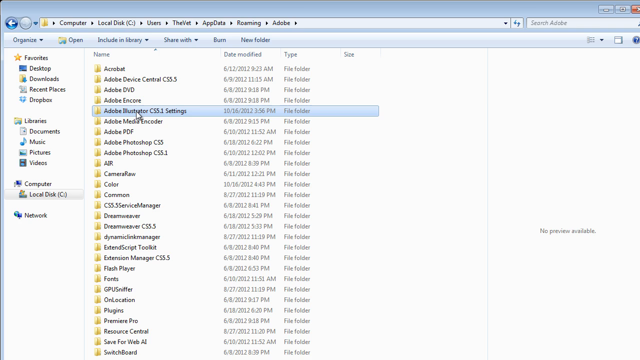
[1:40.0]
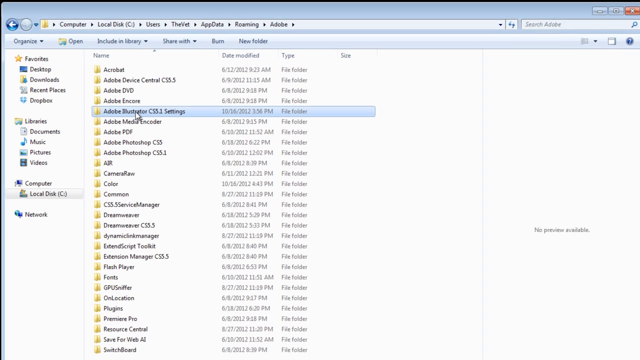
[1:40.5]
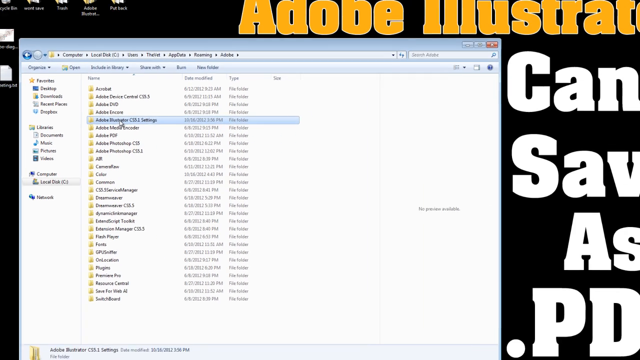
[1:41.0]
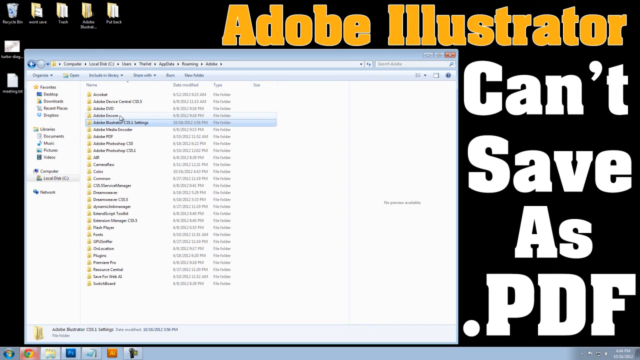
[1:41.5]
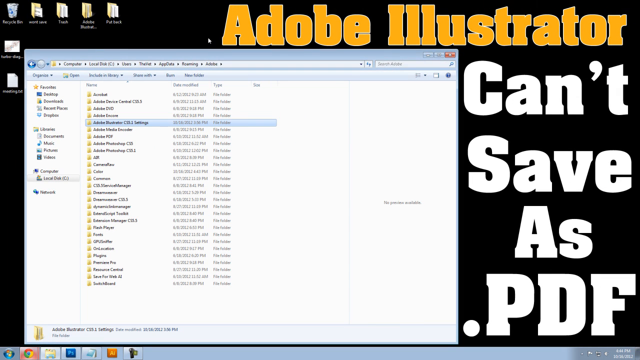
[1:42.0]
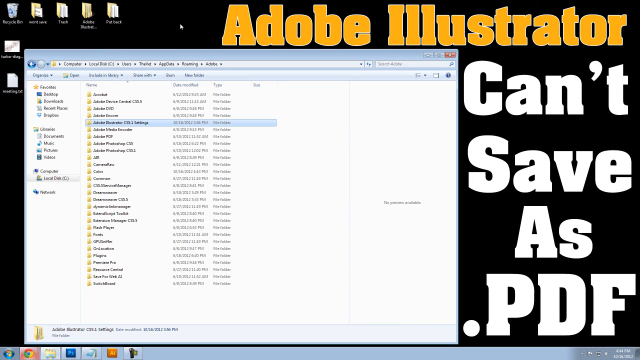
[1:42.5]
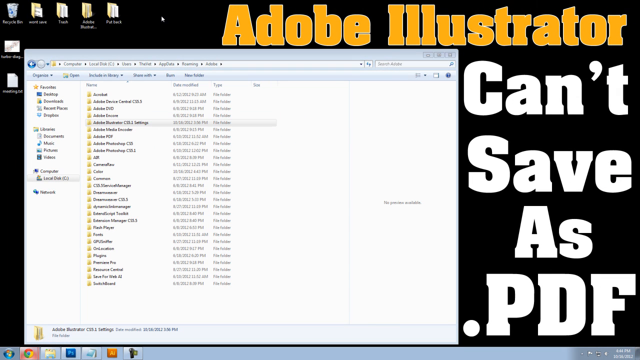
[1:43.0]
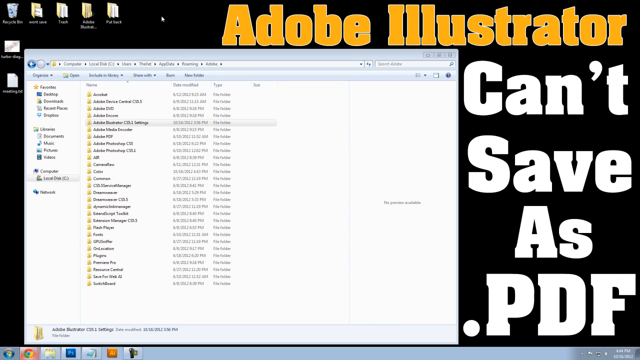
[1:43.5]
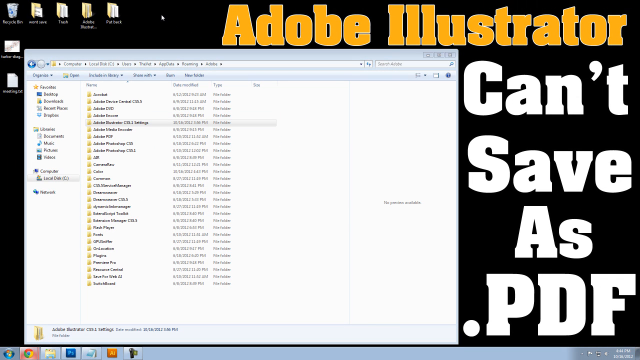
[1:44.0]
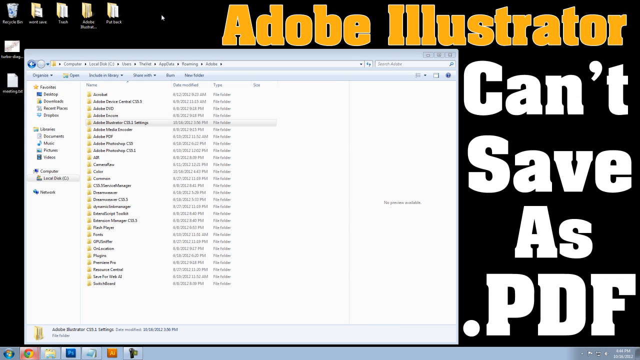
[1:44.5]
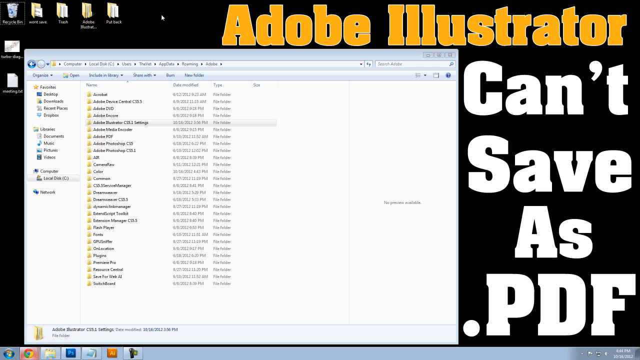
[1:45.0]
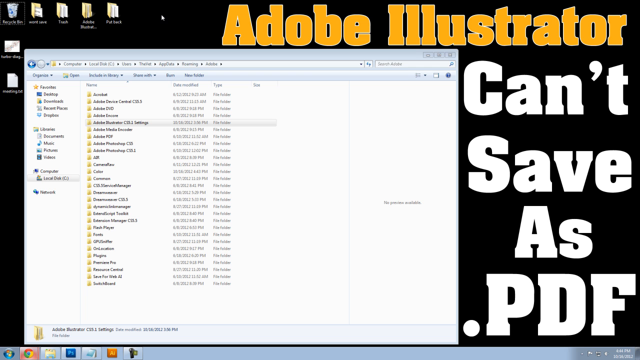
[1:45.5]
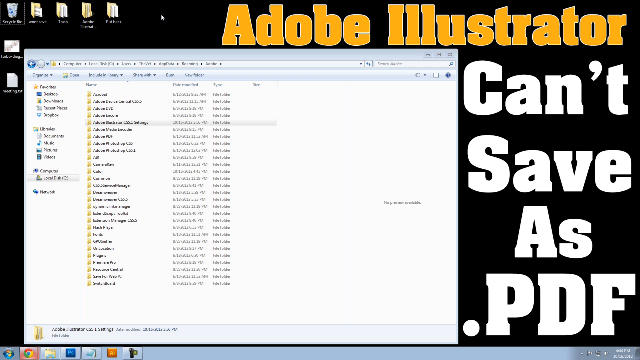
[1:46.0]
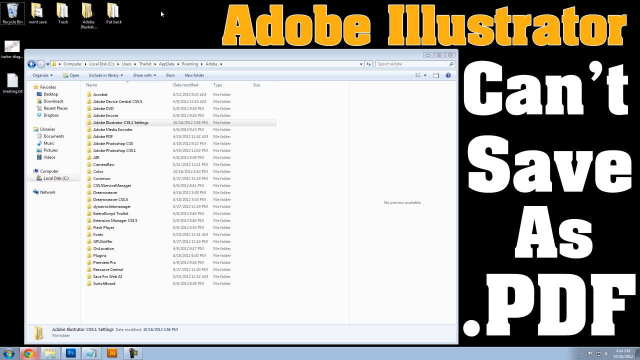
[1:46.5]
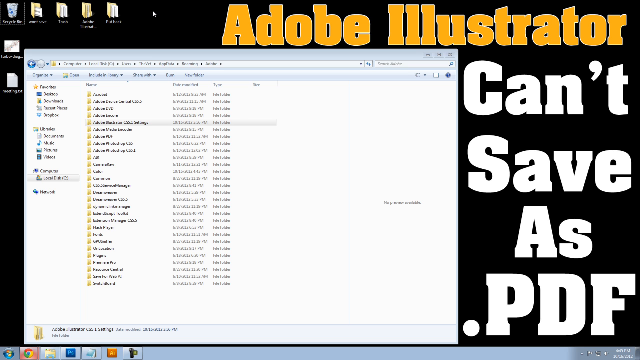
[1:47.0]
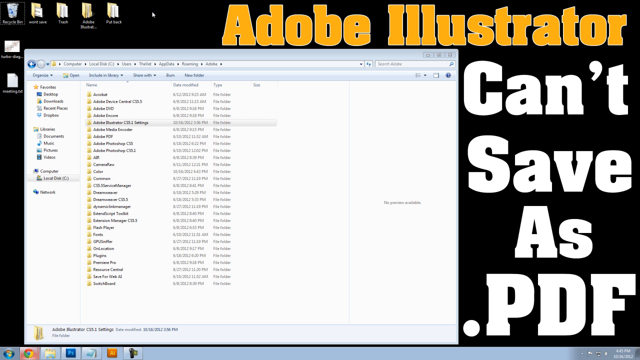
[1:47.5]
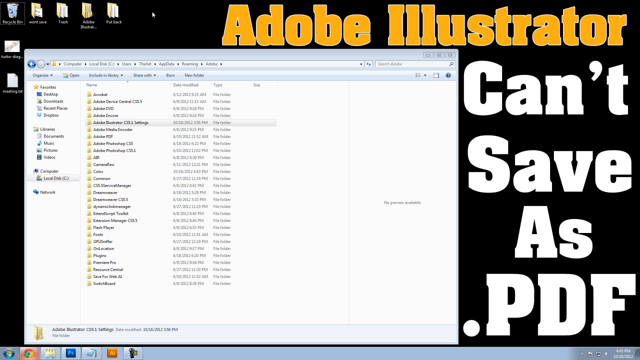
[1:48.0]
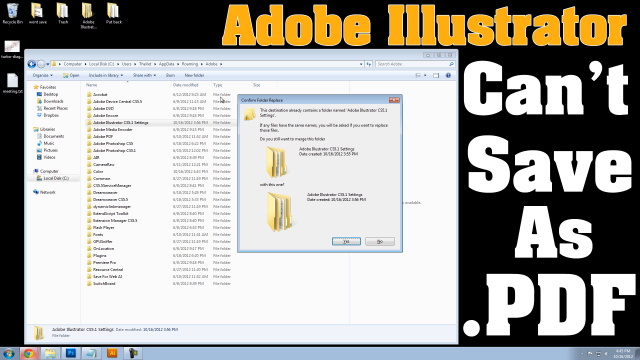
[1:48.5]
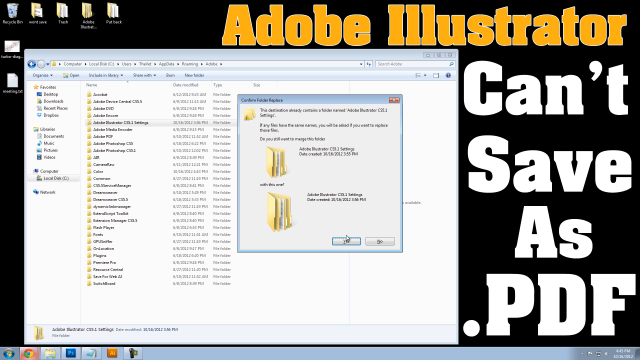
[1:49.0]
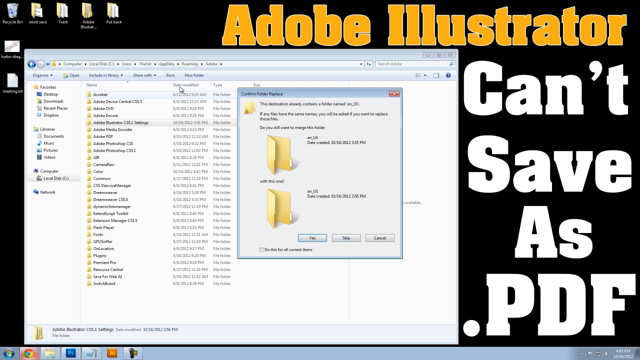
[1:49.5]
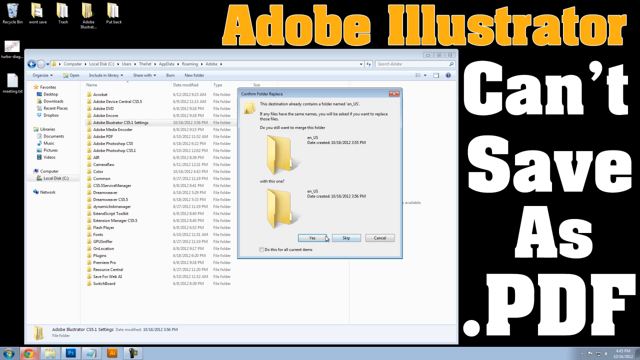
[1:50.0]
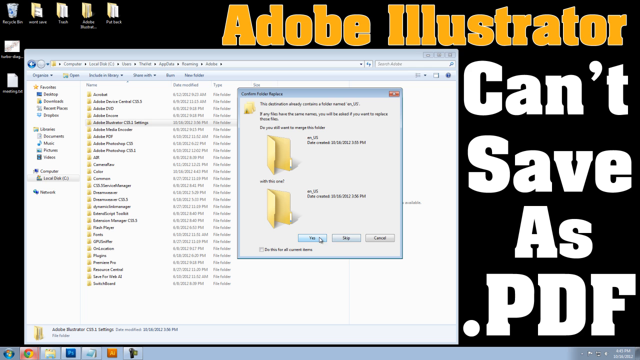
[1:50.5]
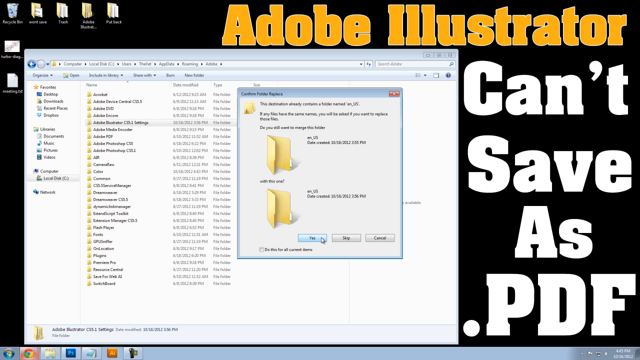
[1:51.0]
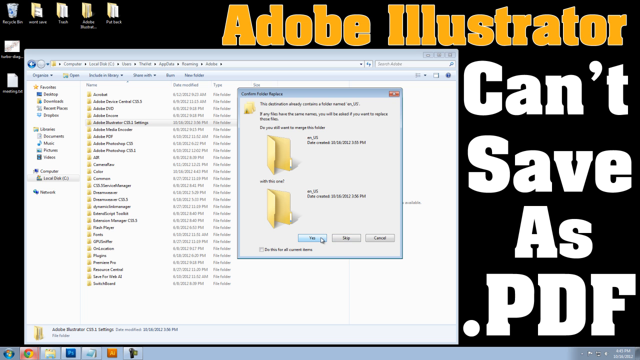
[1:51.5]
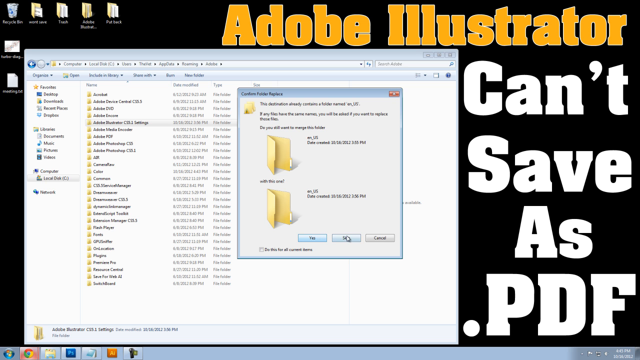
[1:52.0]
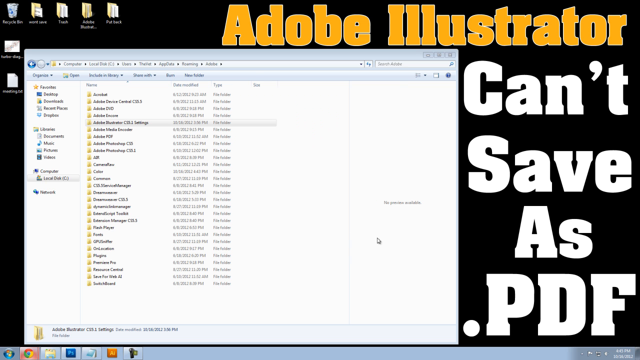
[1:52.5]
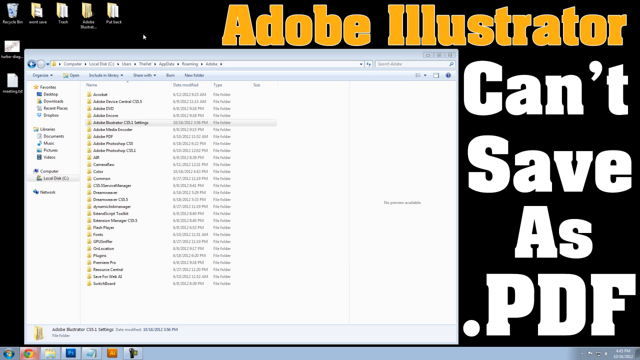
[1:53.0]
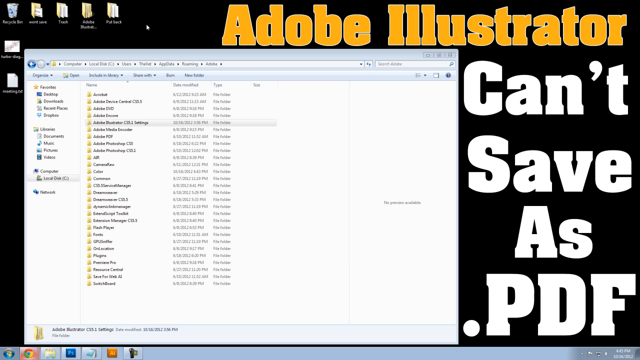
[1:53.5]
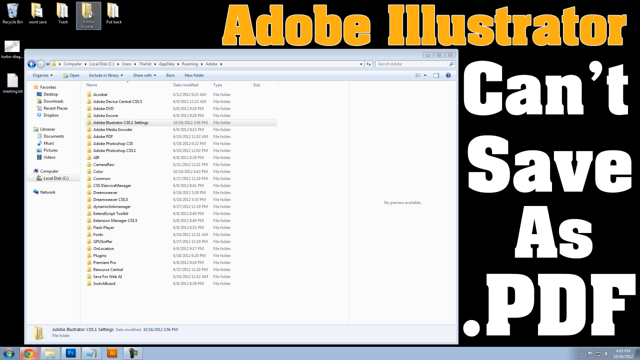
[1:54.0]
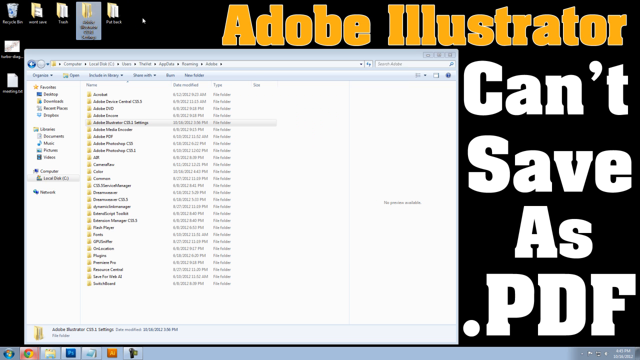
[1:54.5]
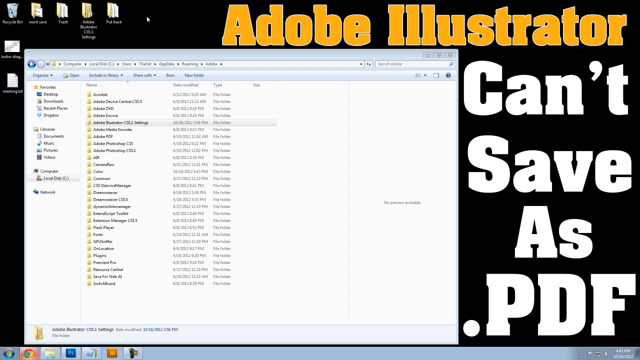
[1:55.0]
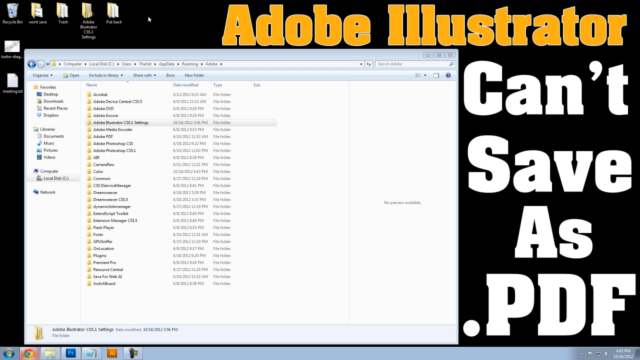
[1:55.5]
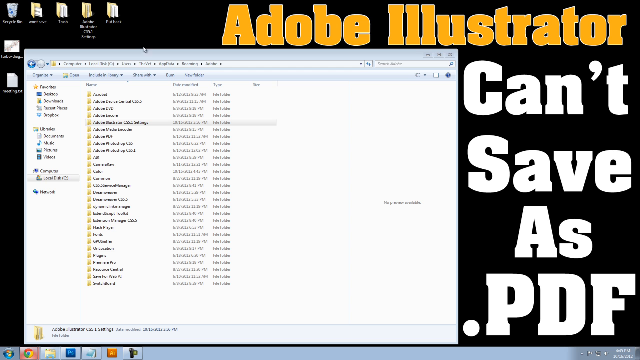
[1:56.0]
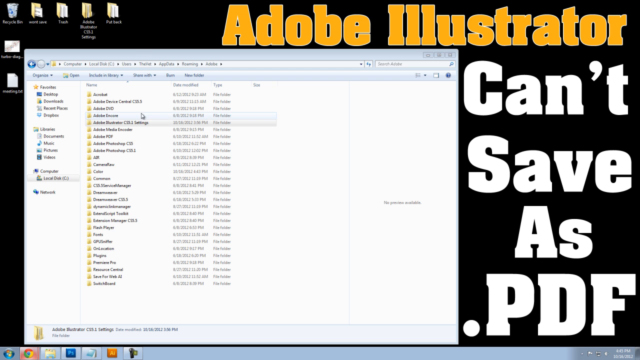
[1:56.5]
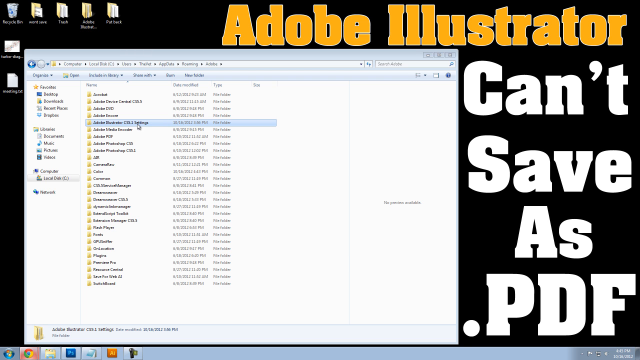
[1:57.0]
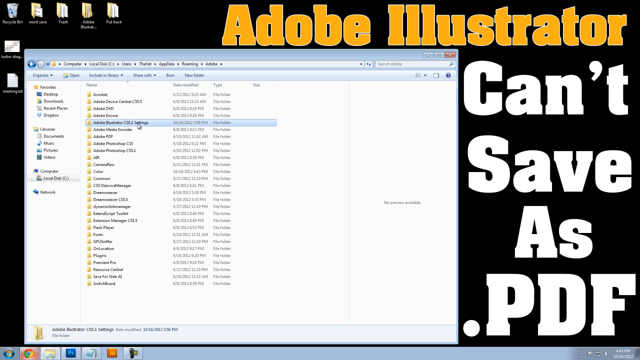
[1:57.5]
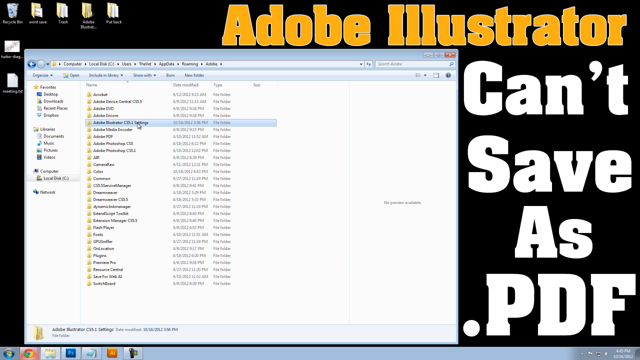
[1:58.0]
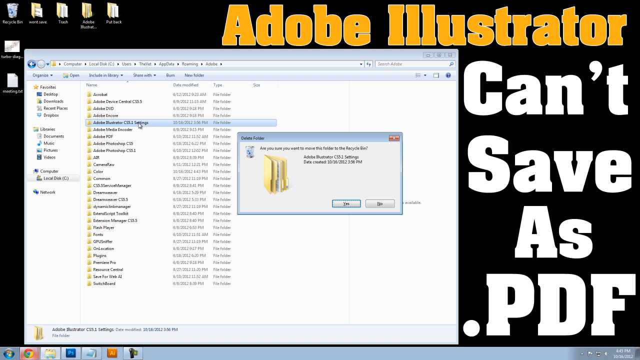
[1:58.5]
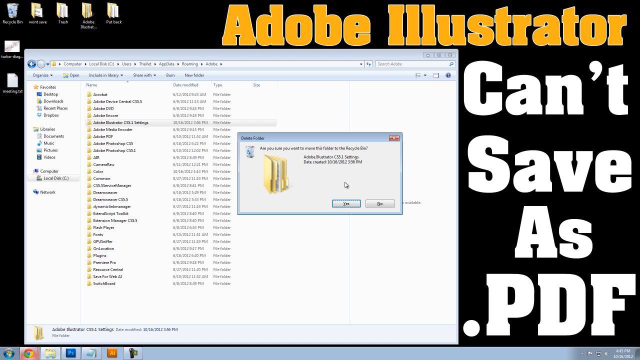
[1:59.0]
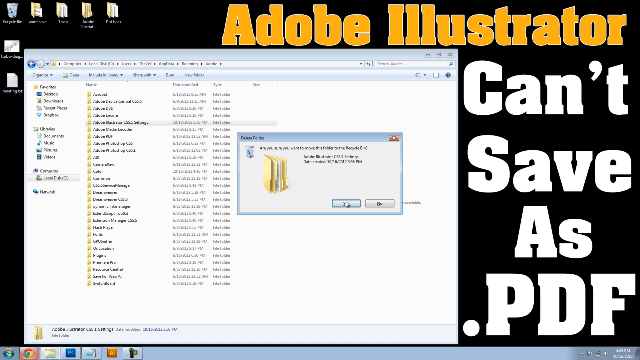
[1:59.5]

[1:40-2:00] A computer window with lots of folders is visible, and the mouse pointer hovers over the Adobe Illustrator settings folder. The view then zooms out to the original window on the computer, which has the caption "Adobe Illustrator can't save PDFs". The mouse moves toward the top of that window, bringing up some sort of Windows command with two open folders, which is then closed. The pointer double-clicks, or maybe just click-highlights, some other elements of the computer desktop. No captions appear.